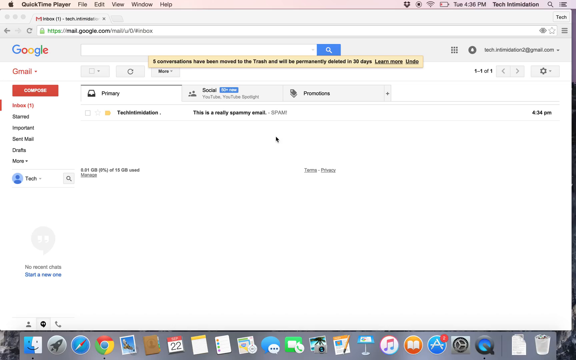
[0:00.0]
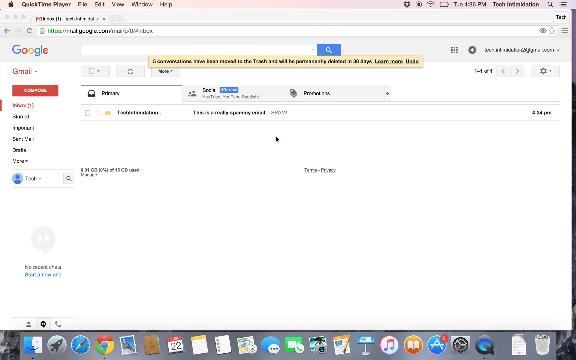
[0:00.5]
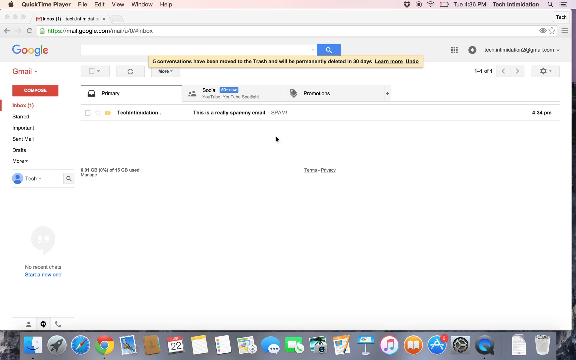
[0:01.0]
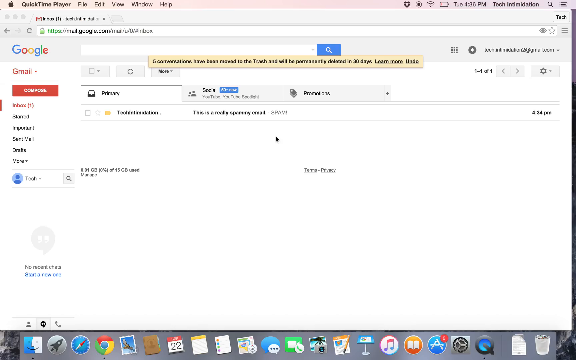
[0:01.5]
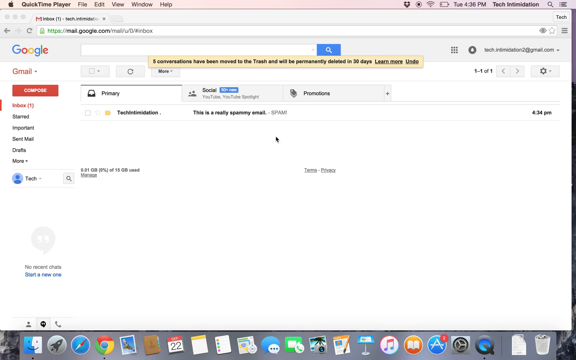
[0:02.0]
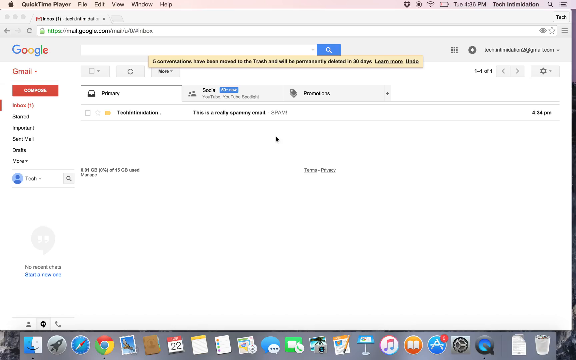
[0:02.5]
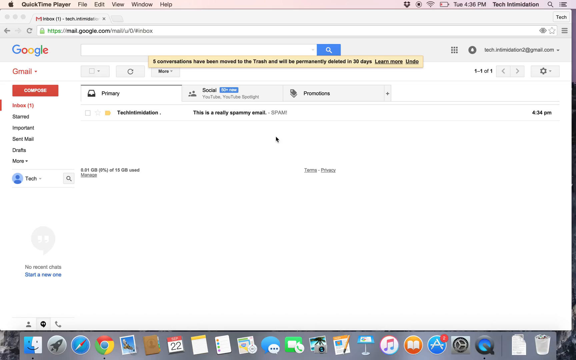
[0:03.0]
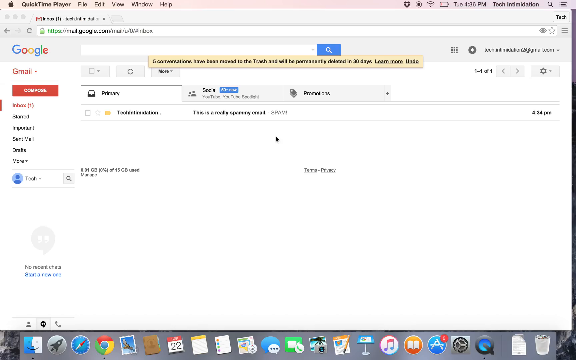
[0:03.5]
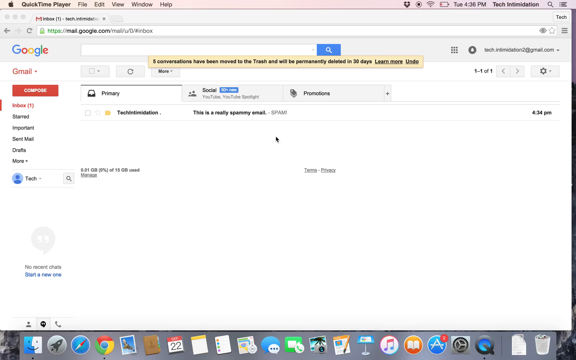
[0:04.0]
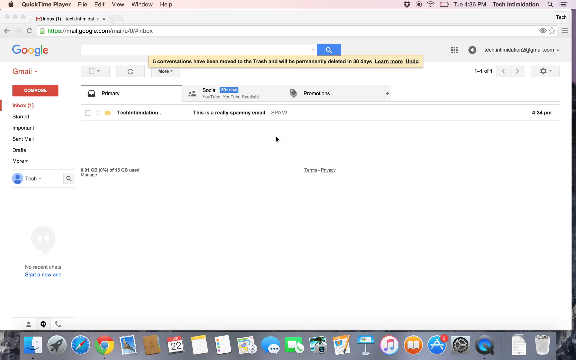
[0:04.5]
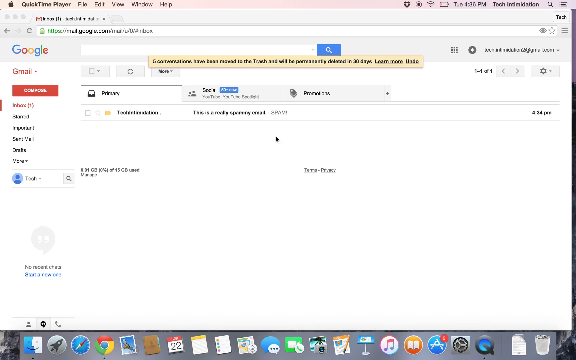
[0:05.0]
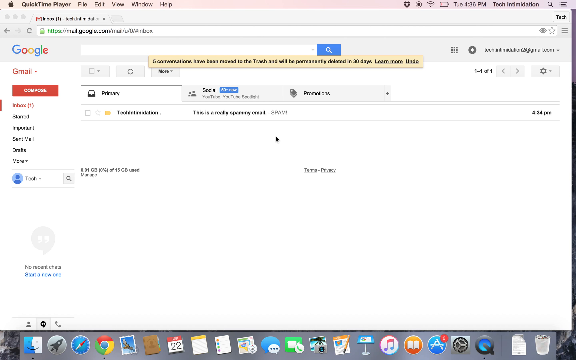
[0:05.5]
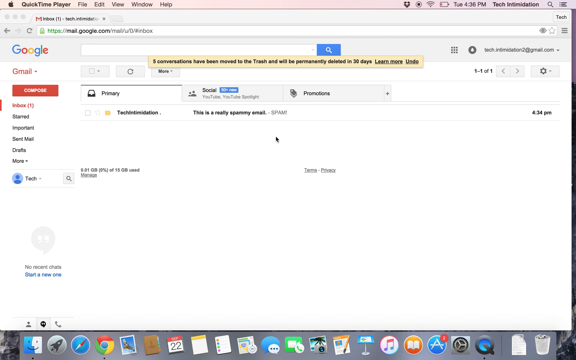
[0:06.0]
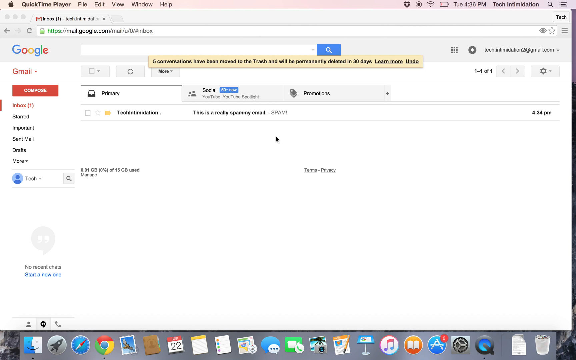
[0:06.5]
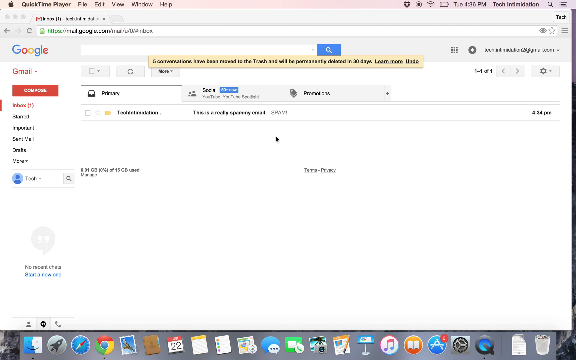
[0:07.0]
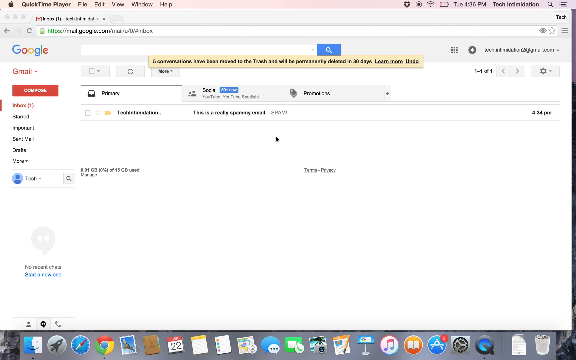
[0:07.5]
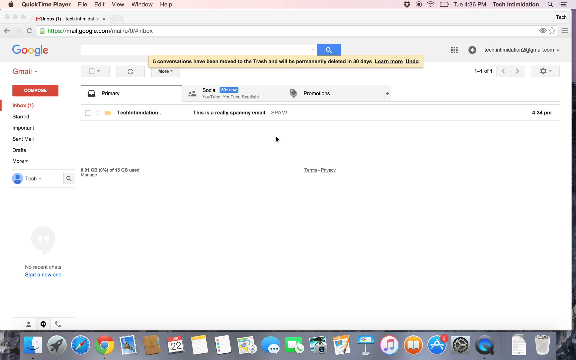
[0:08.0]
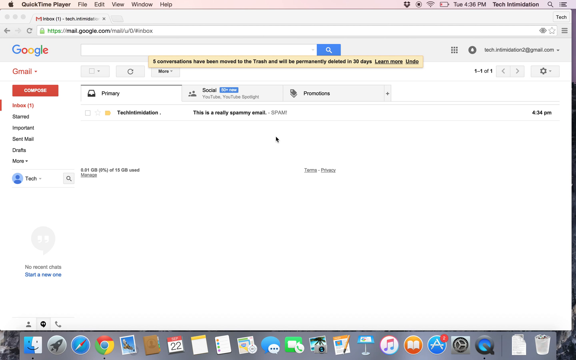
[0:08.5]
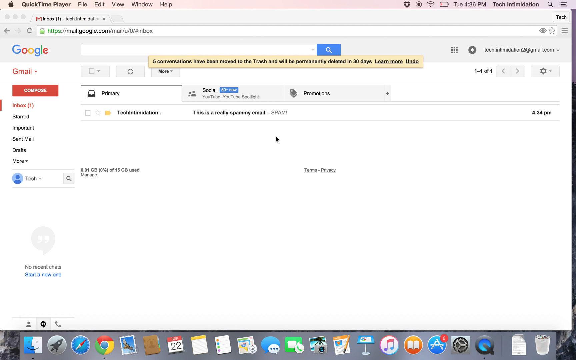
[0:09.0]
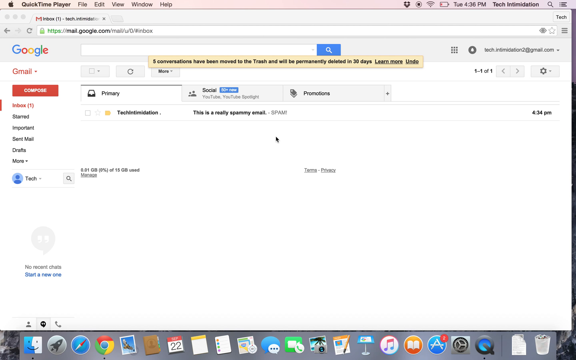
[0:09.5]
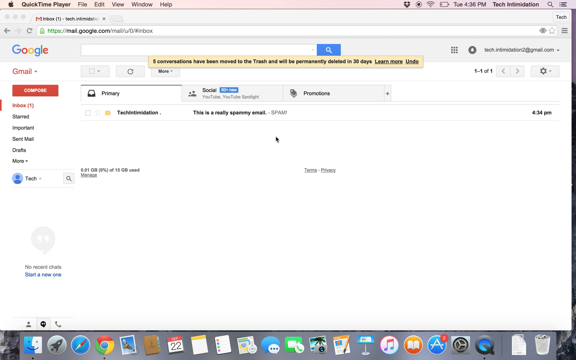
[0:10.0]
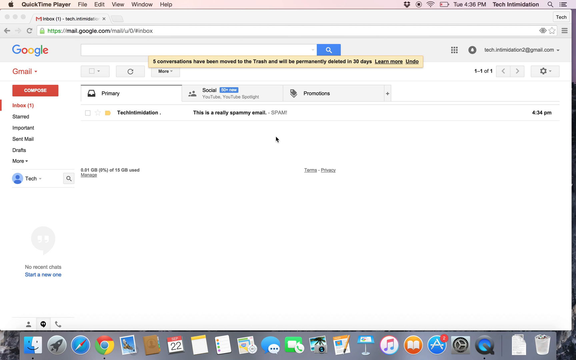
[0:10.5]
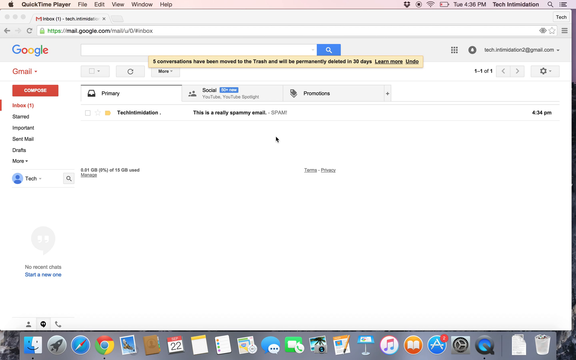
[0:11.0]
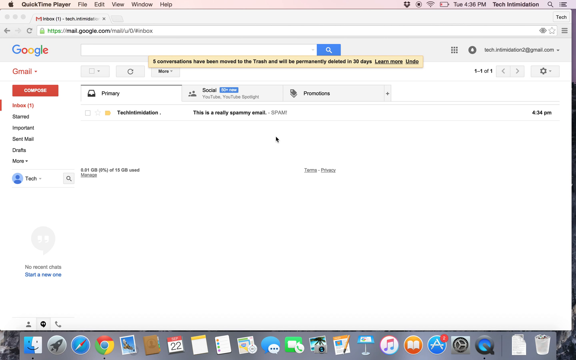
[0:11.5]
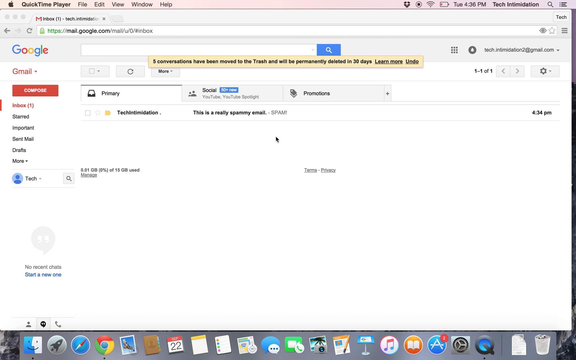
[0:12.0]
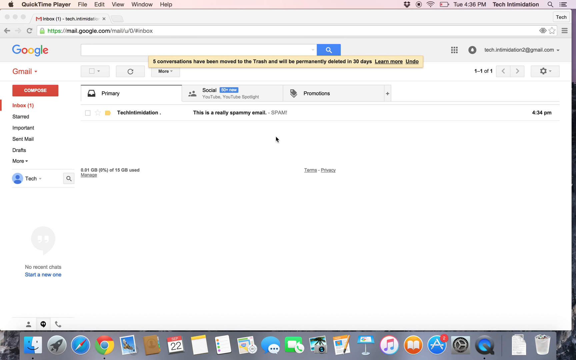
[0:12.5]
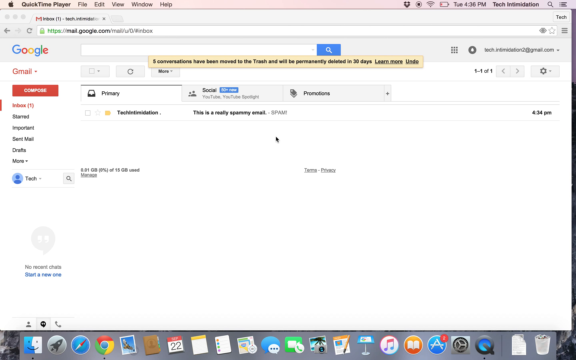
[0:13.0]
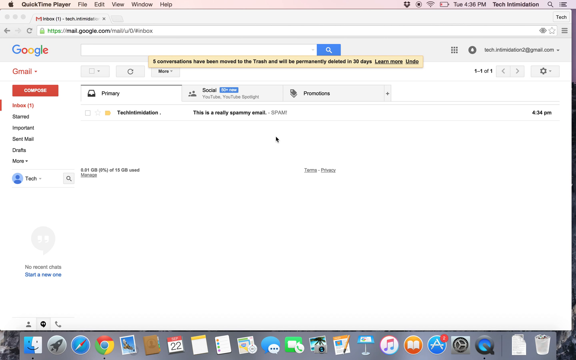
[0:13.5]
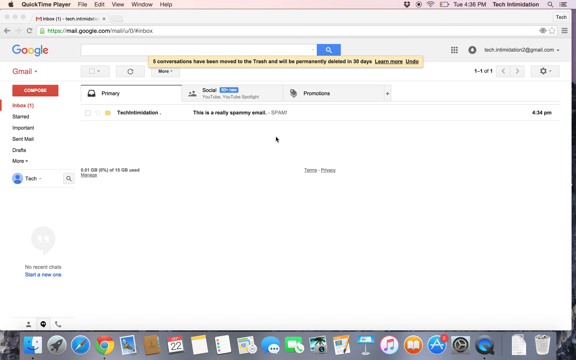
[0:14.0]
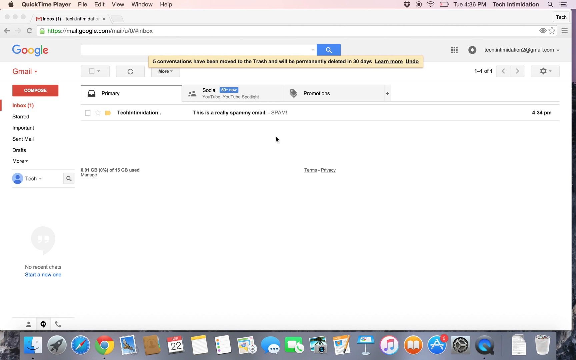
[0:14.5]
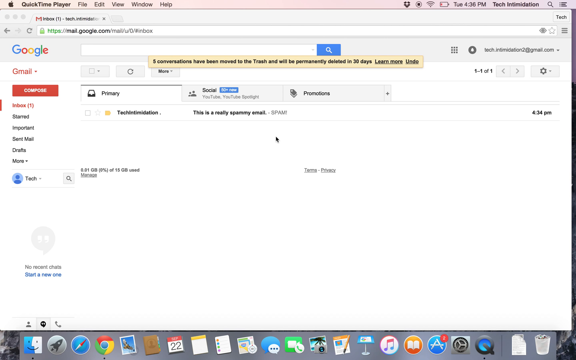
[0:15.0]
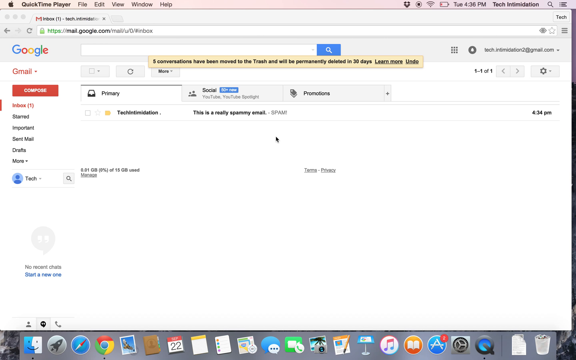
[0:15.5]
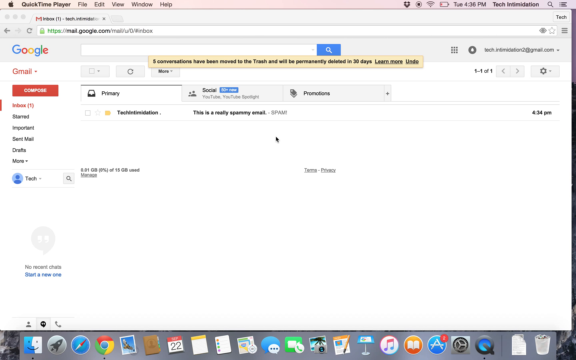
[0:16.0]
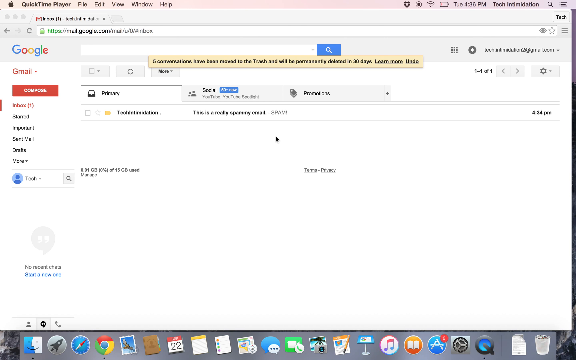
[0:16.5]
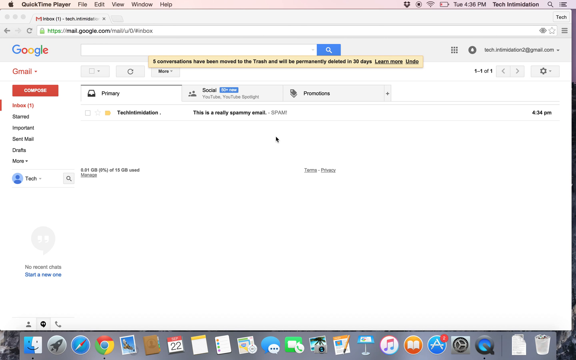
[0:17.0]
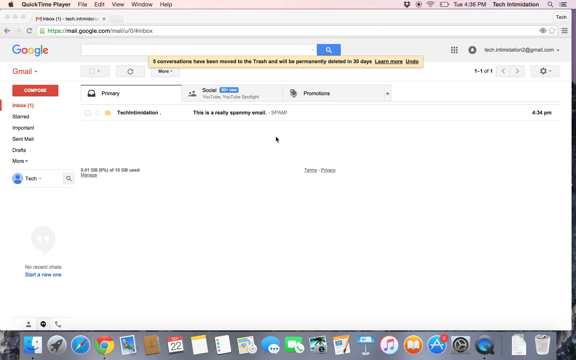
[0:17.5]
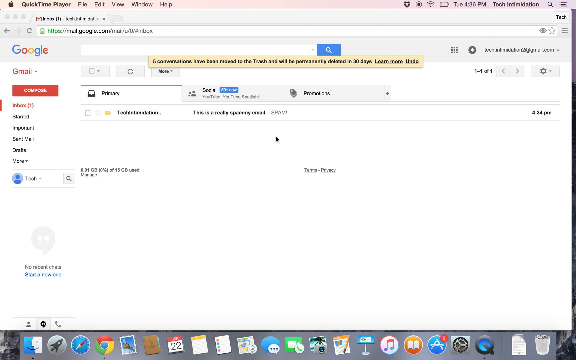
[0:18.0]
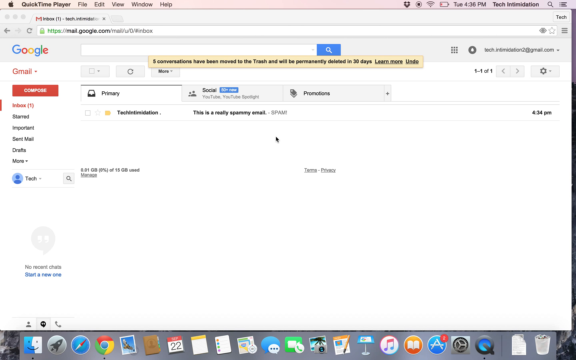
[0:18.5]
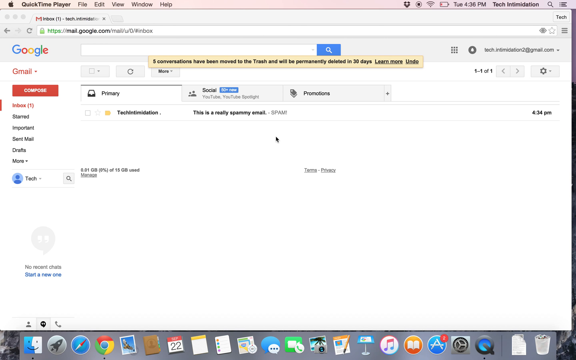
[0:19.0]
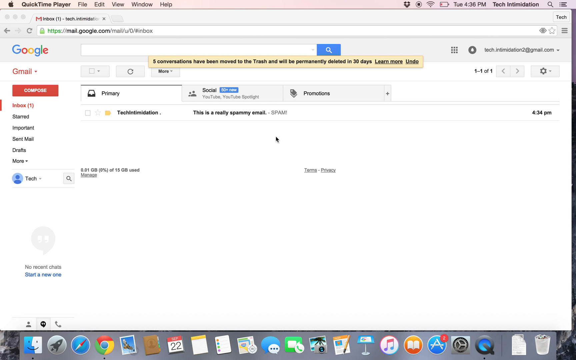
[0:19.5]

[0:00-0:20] A search page, possibly on Google, shows how to block and delete senders, stopping them from sending messages. Gmail is visible, and under Gmail there are features such as Inbox, Starred messages, Important messages, Sent Mail, Drafts and more. There is also a space for Google search where a search can be typed in. At the top left of the screen is a menu bar reading QuickTime Player, File, Edit, View, Window and Help. At the top right of the screen are the battery level, the time and the Wi-Fi connection indicator.